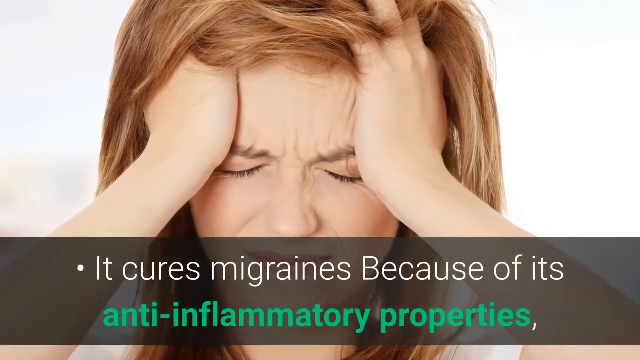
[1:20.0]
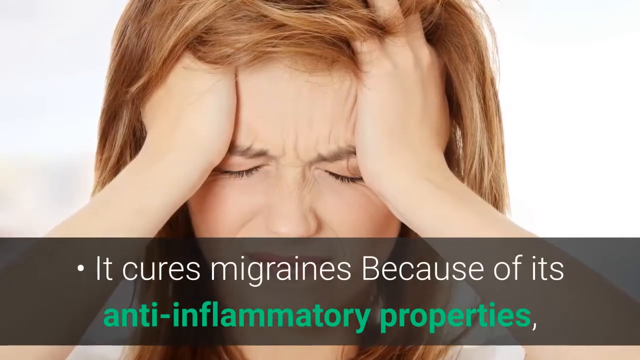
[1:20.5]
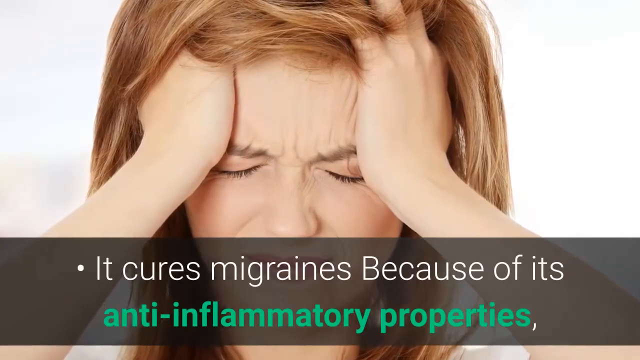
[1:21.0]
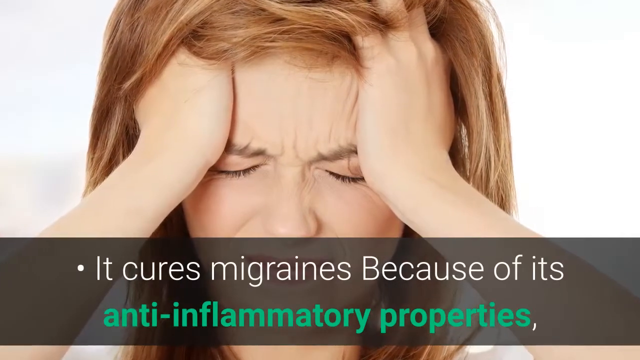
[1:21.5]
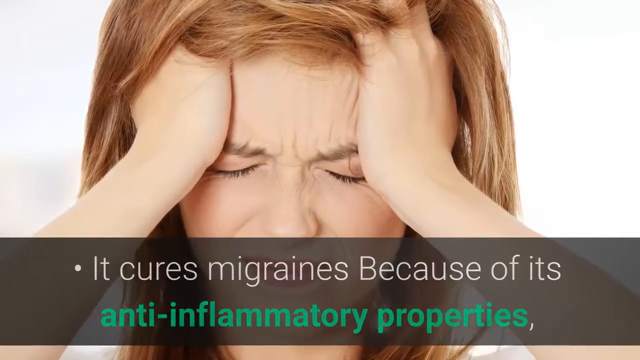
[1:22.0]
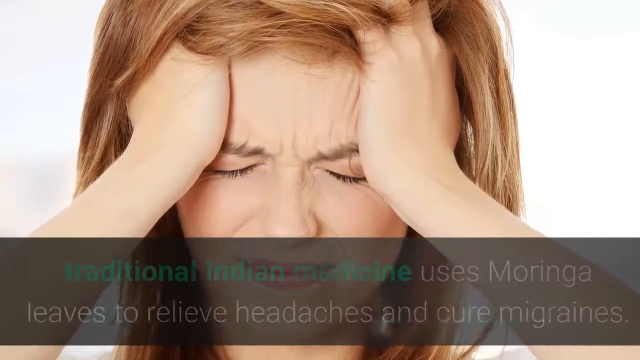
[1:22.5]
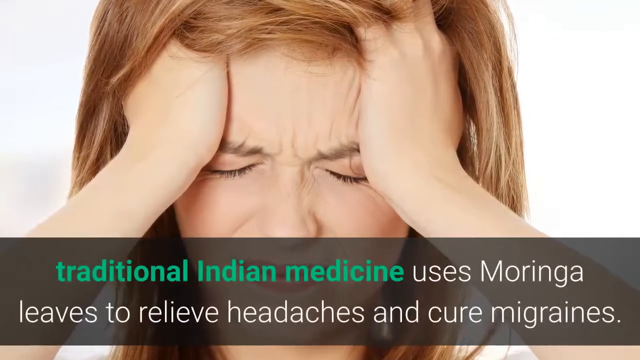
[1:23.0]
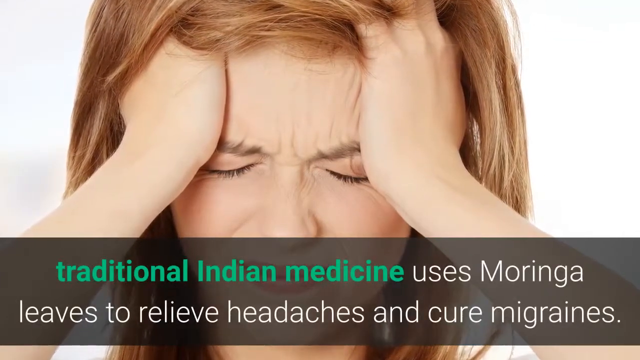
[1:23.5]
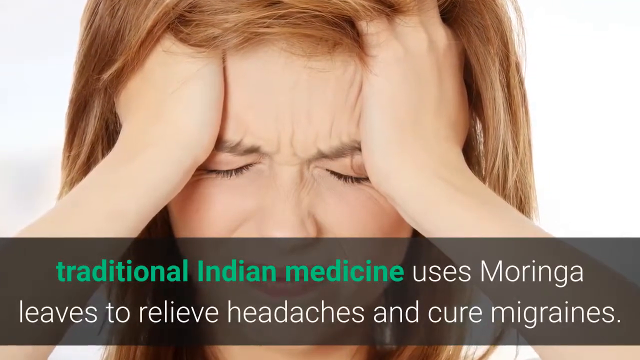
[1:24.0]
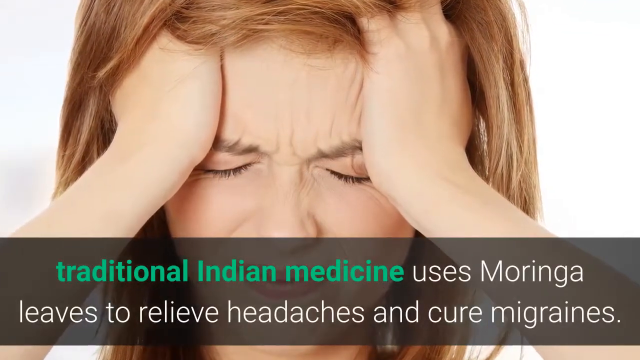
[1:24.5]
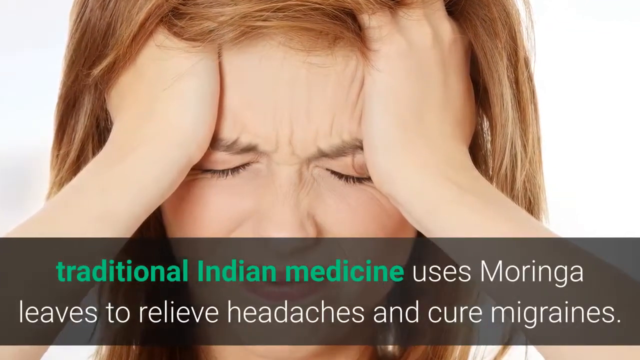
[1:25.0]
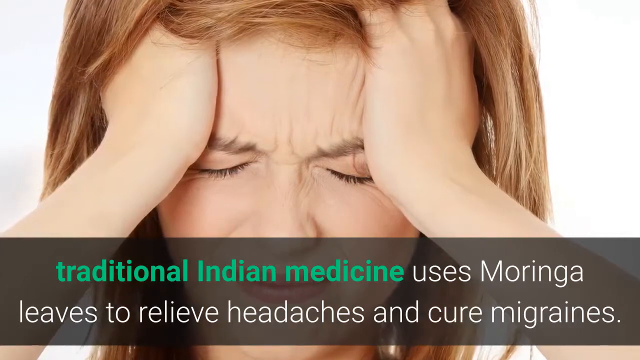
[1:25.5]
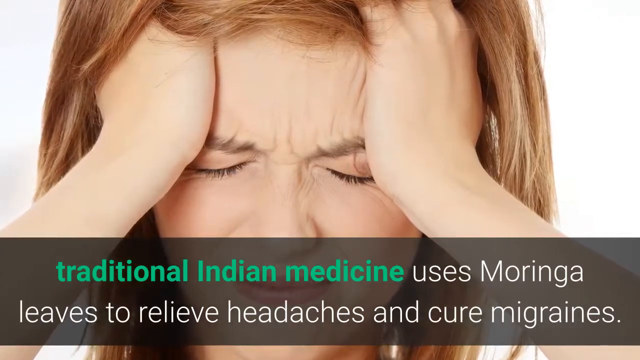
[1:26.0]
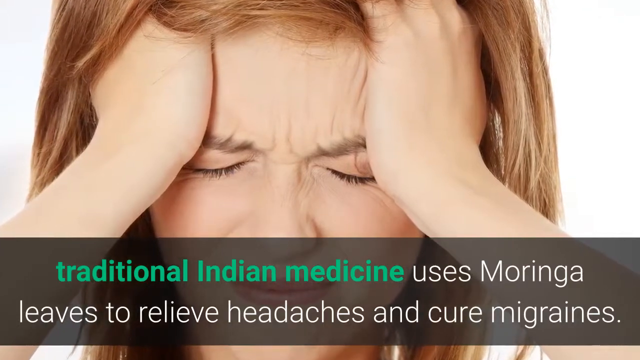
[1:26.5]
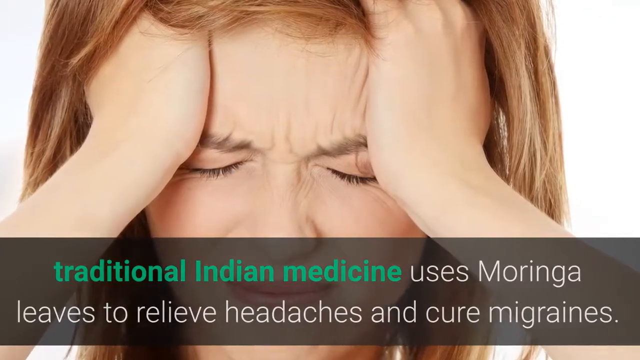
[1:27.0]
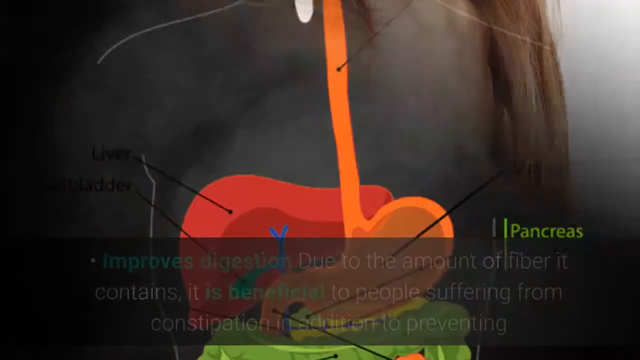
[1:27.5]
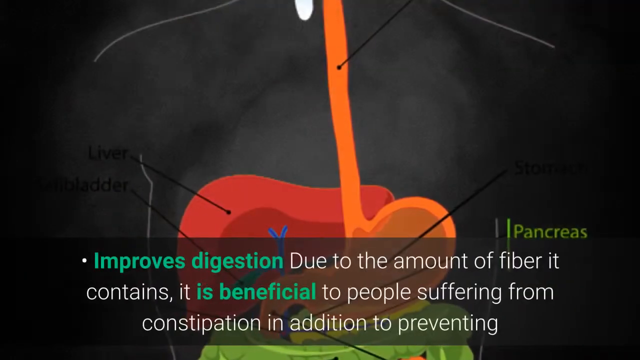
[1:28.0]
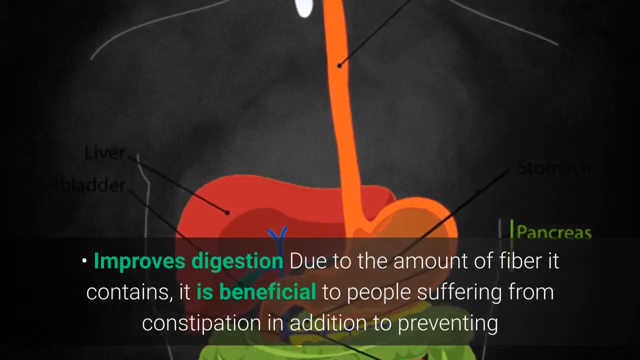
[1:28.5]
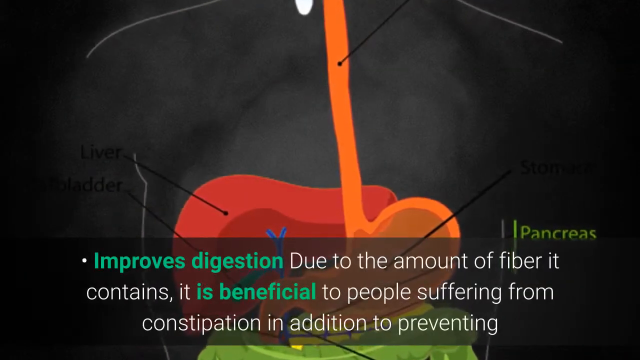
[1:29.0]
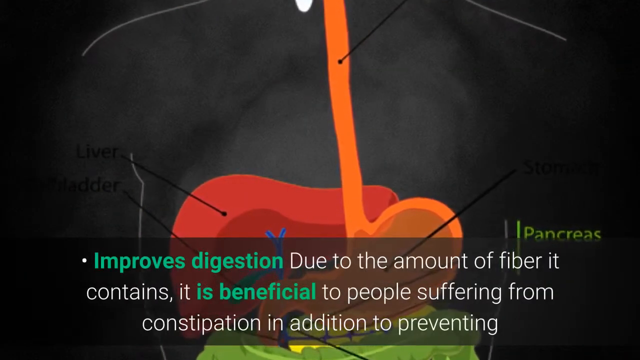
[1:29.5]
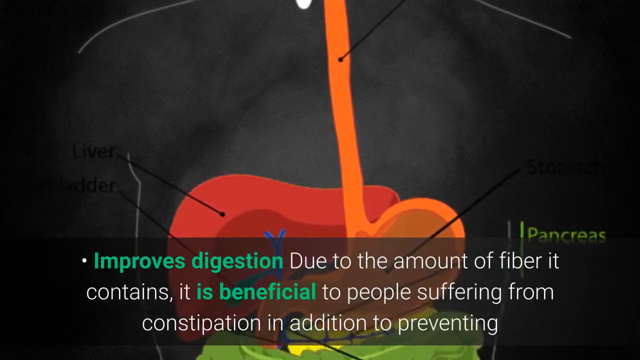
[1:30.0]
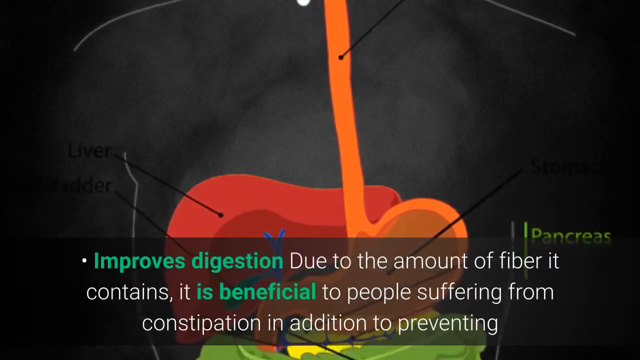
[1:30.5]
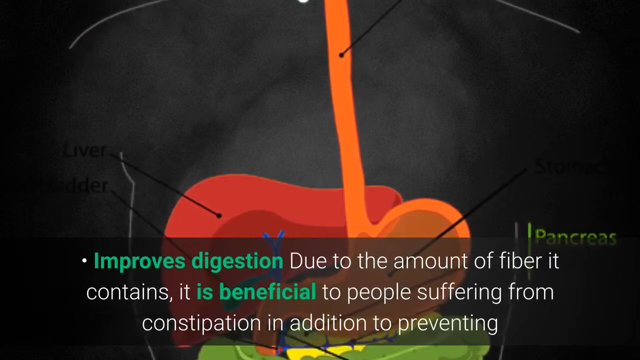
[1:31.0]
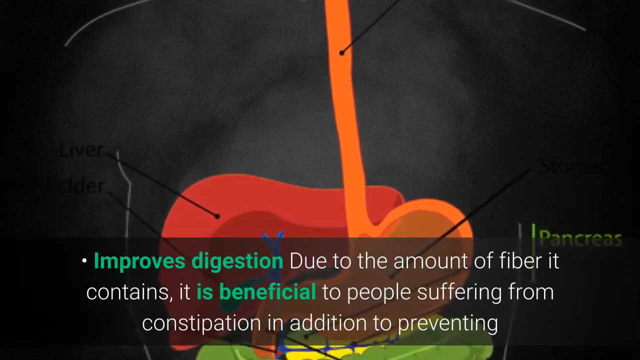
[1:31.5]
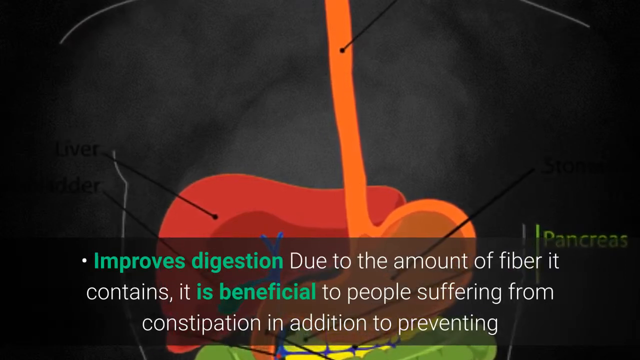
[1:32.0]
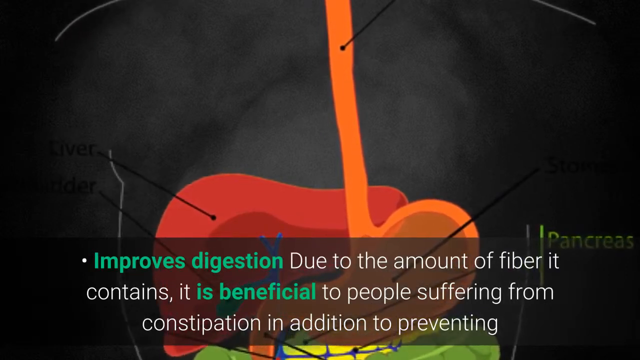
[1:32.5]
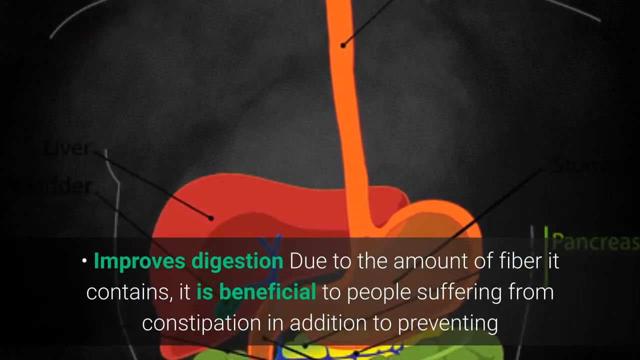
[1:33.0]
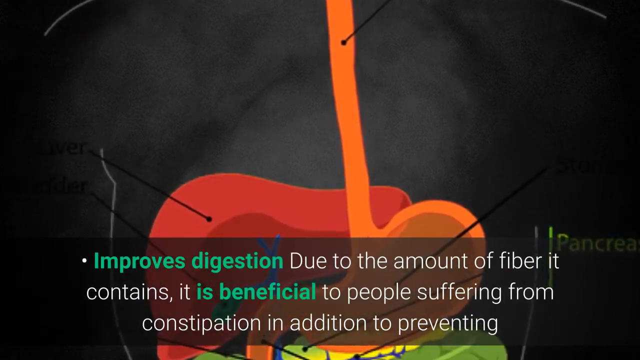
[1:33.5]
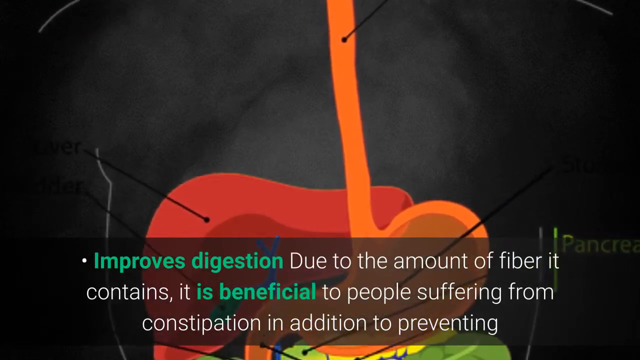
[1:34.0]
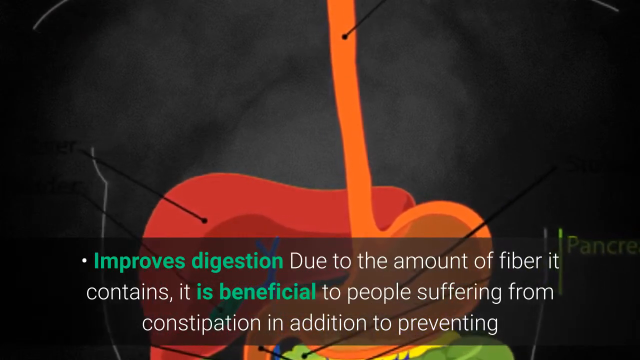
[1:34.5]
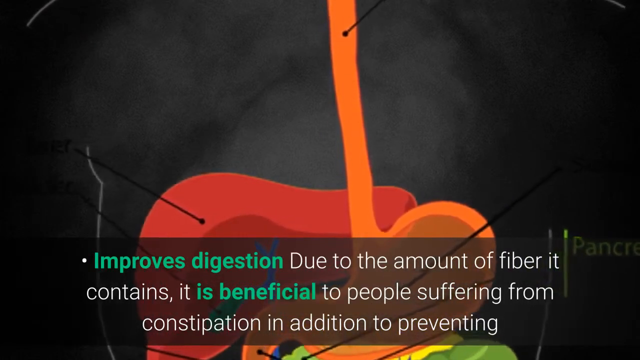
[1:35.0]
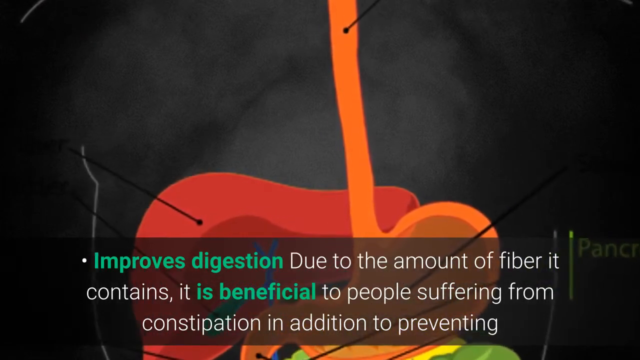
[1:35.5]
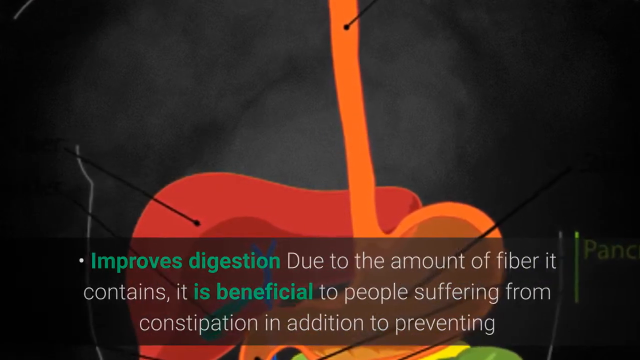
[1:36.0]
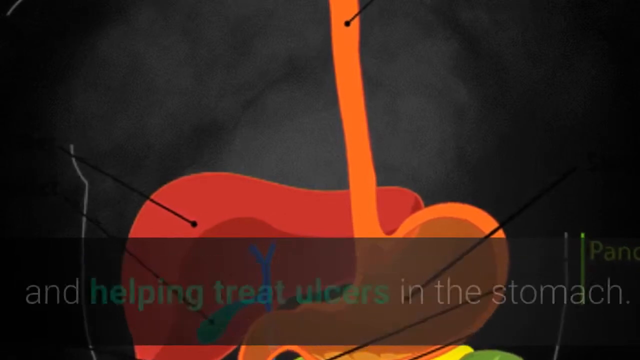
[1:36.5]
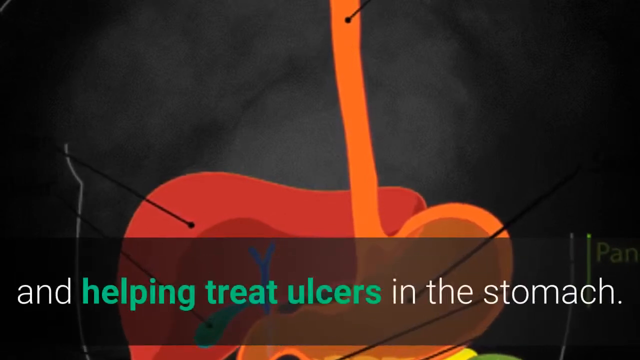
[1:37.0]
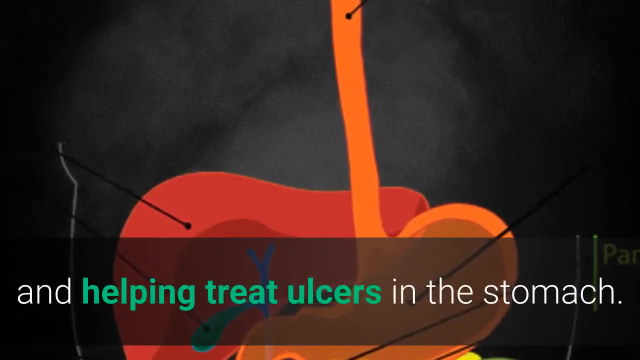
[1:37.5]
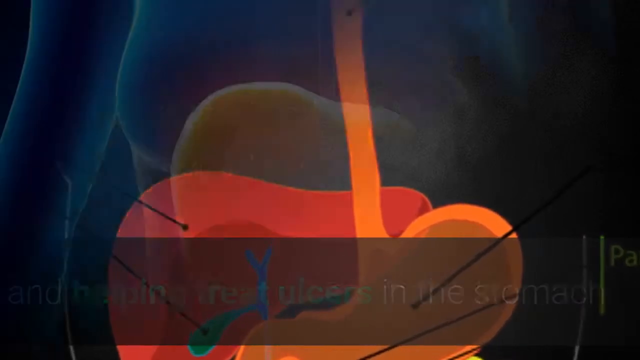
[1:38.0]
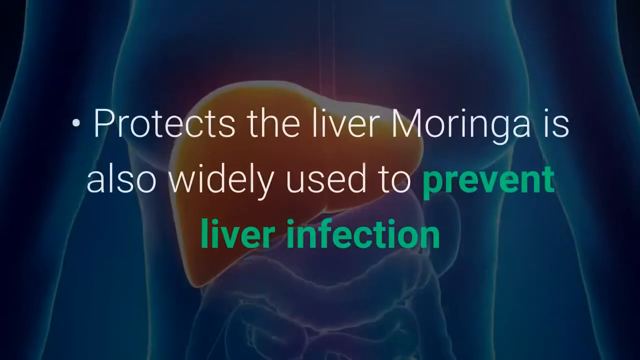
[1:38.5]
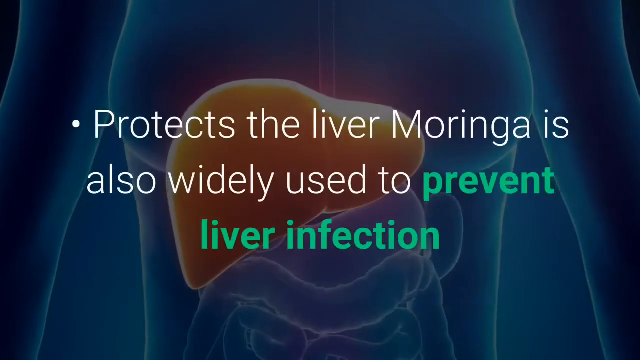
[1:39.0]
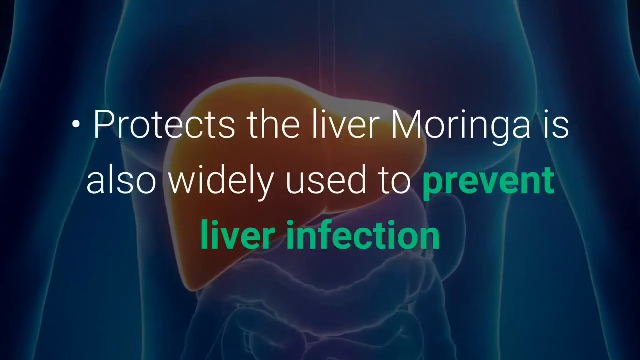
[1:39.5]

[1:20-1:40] A Caucasian woman has her hands on her head and scalp, looking irritated as if she has a headache. Text says "in traditional Indian medicine, it uses Moringa leaves to relieve headaches." It then says moringa improves digestion through the fiber it contains and is beneficial to people suffering from constipation, in addition to helping treat ulcers, followed by "protects the liver." The video then shows a cartoon of the GI system against a completely white background.